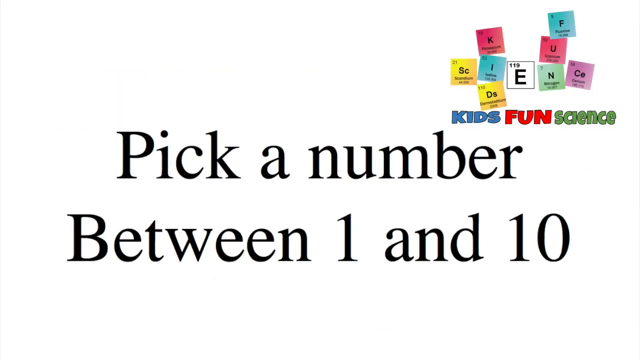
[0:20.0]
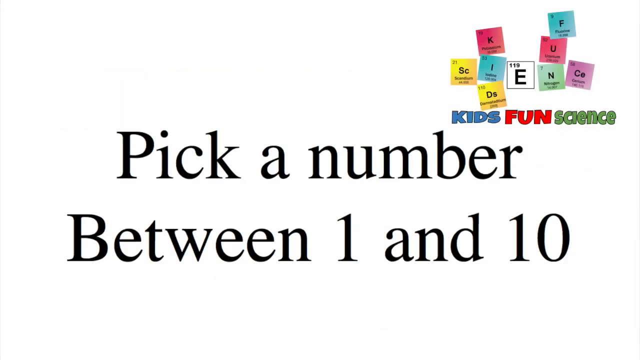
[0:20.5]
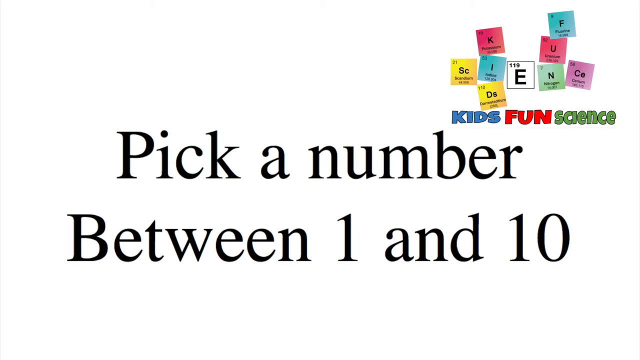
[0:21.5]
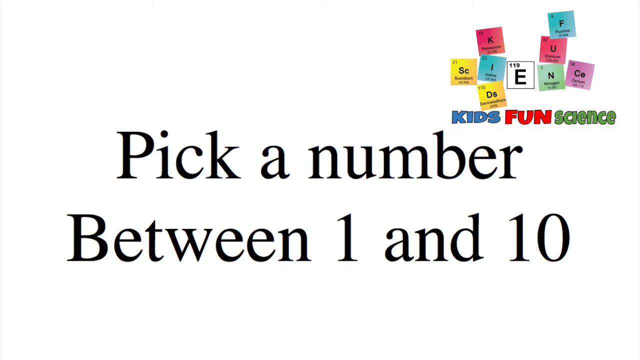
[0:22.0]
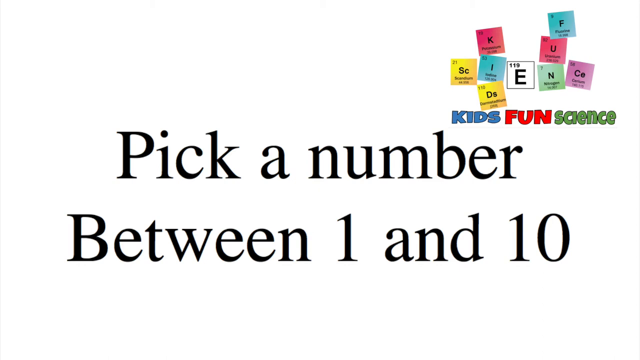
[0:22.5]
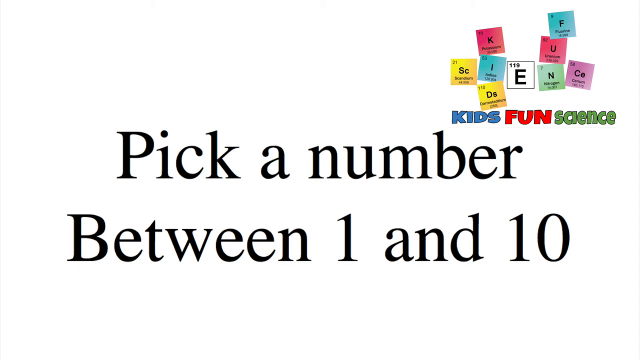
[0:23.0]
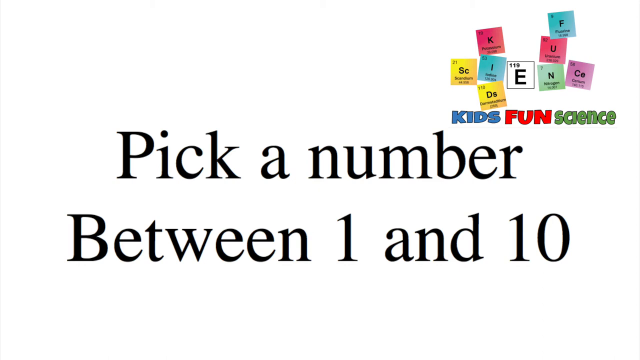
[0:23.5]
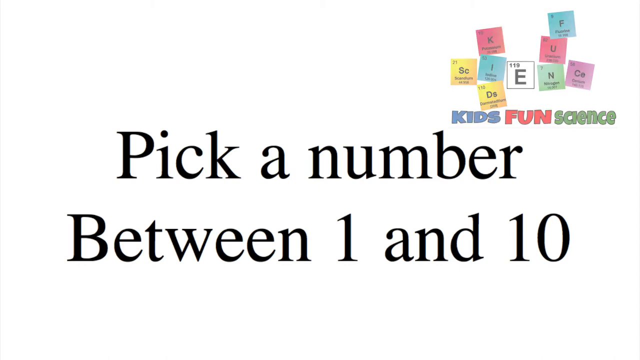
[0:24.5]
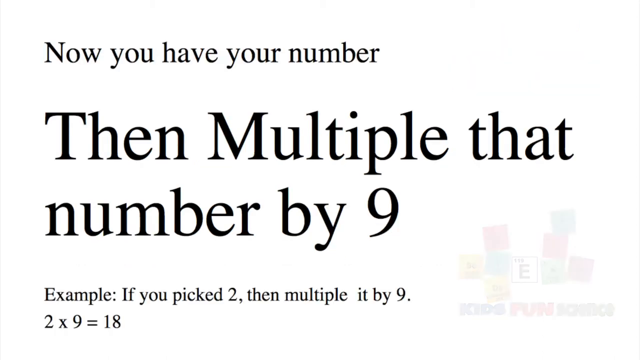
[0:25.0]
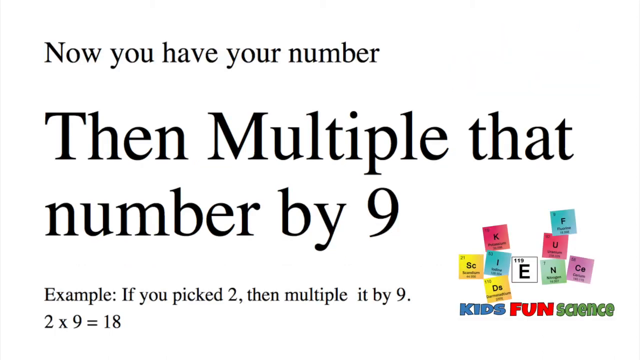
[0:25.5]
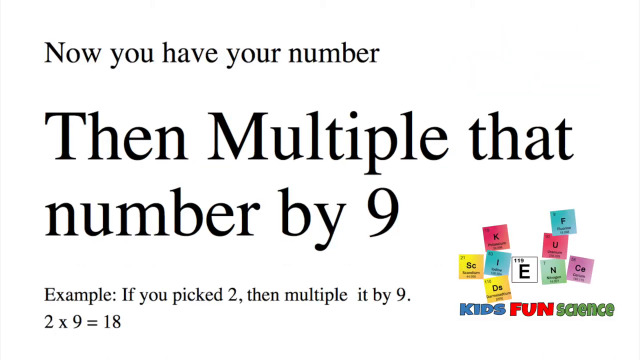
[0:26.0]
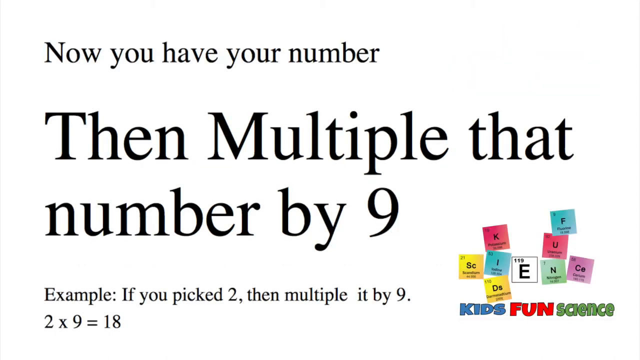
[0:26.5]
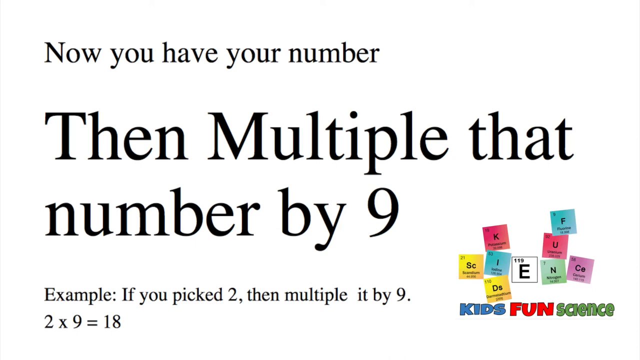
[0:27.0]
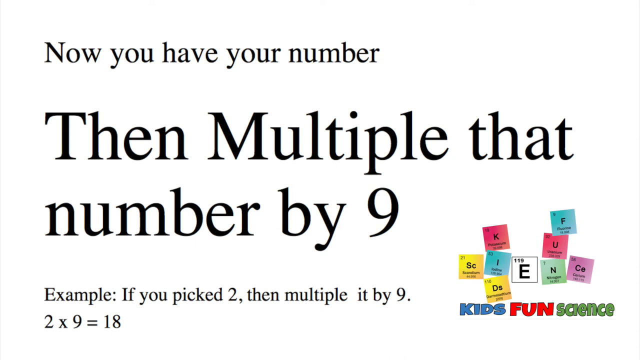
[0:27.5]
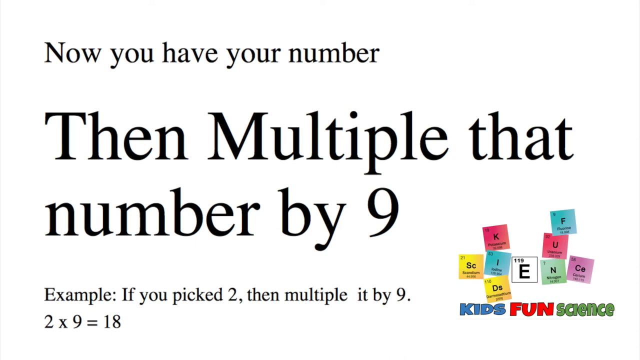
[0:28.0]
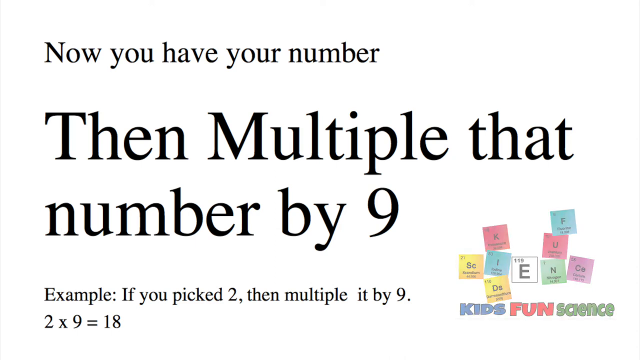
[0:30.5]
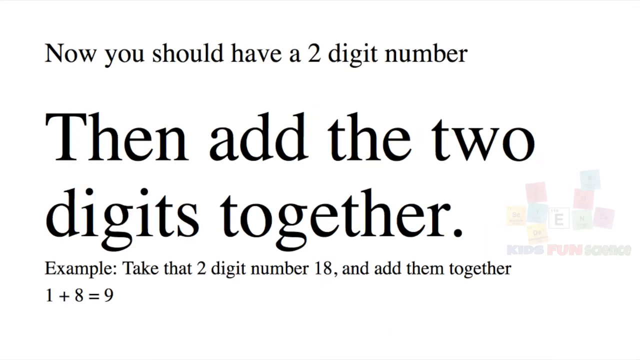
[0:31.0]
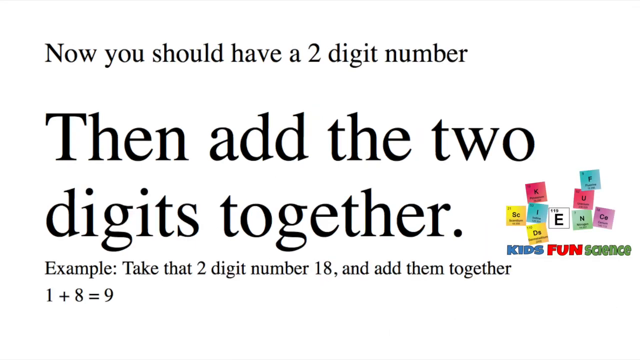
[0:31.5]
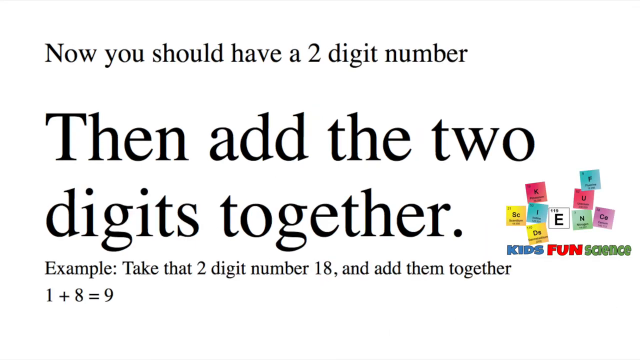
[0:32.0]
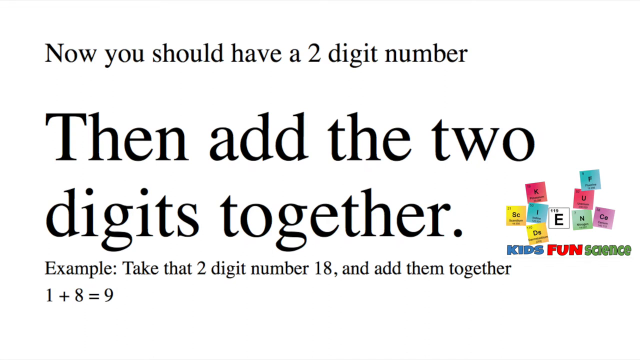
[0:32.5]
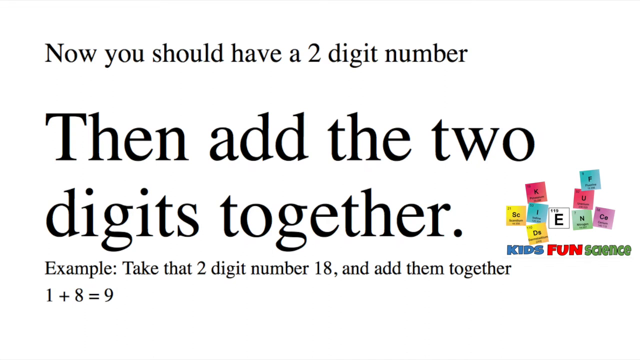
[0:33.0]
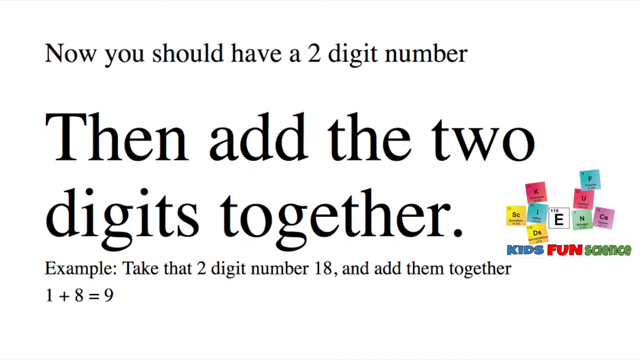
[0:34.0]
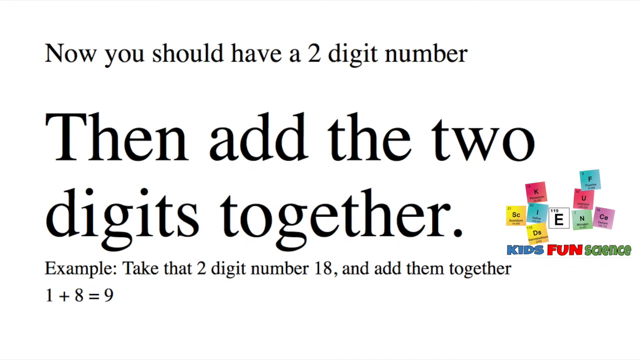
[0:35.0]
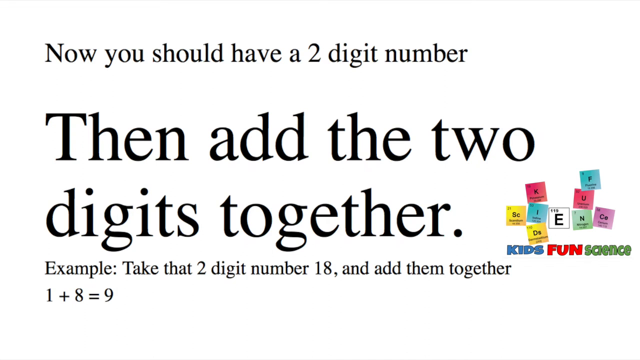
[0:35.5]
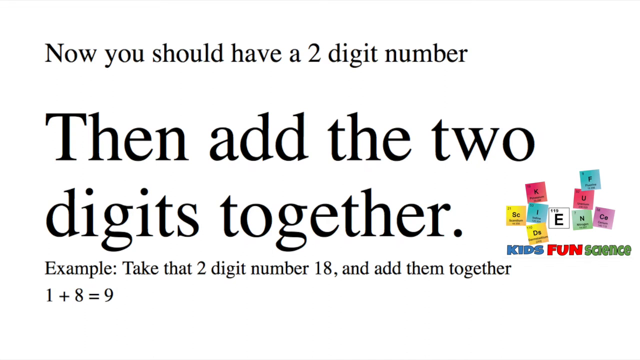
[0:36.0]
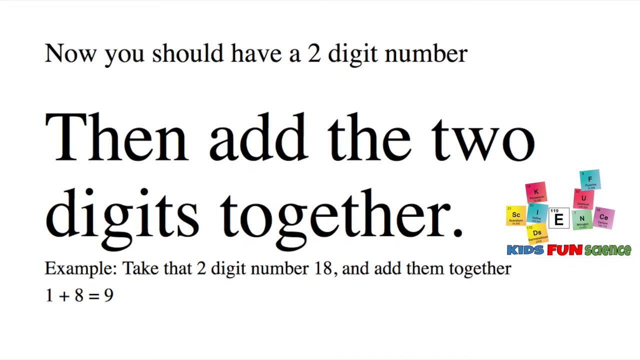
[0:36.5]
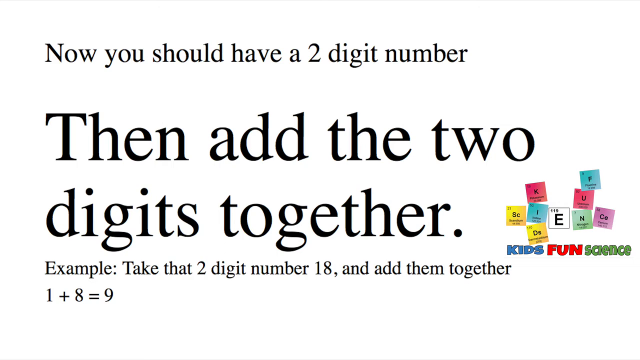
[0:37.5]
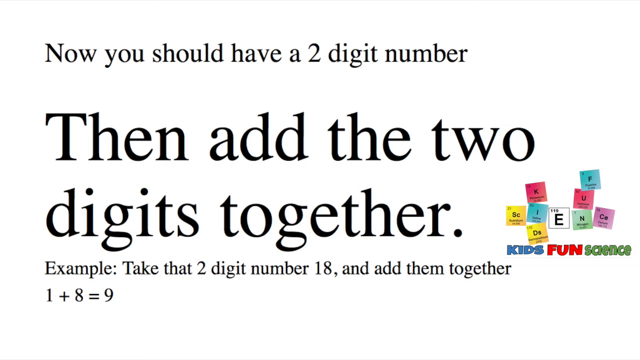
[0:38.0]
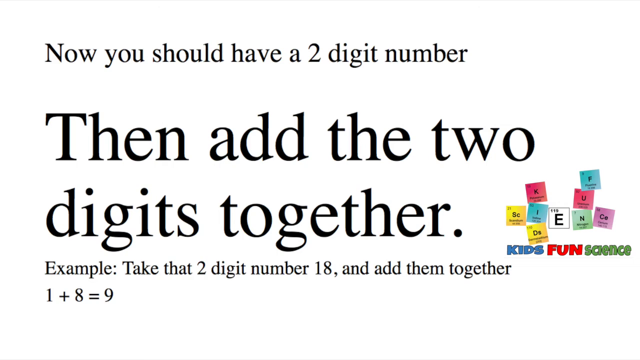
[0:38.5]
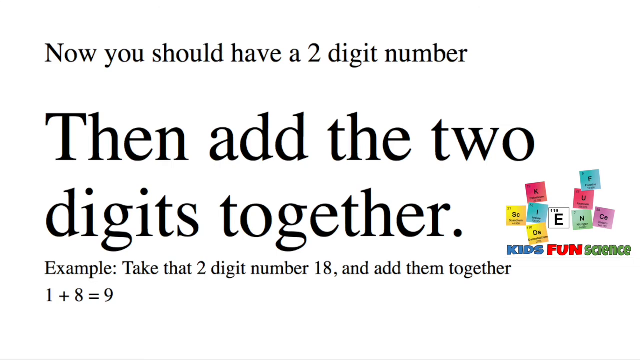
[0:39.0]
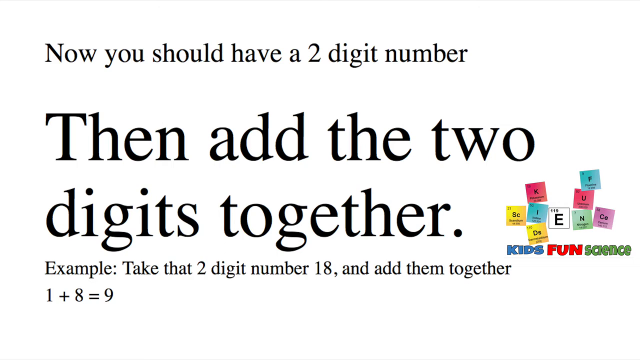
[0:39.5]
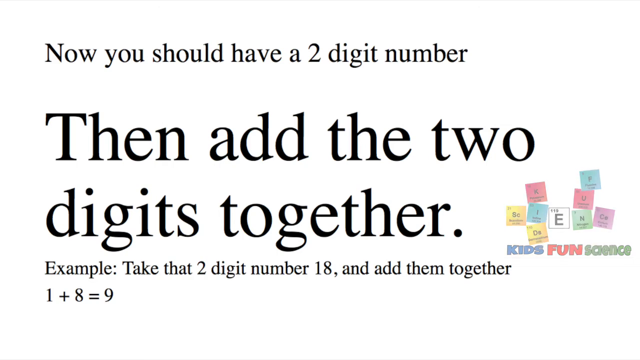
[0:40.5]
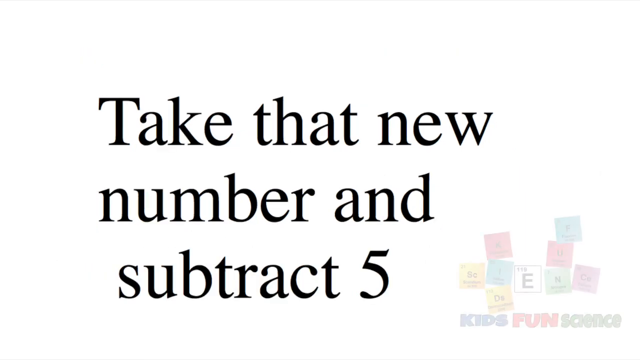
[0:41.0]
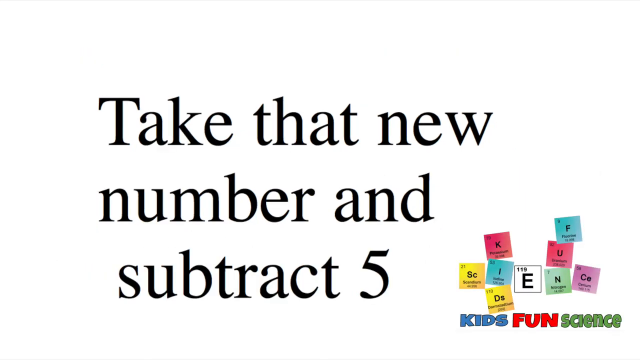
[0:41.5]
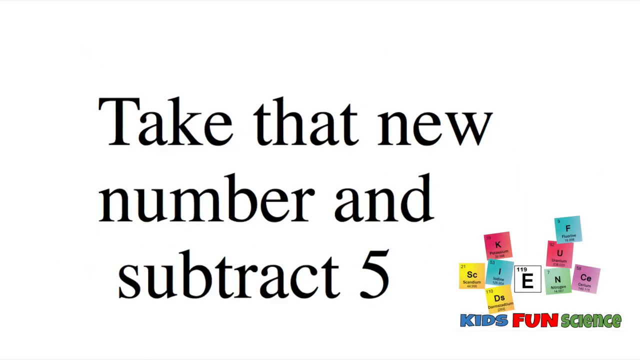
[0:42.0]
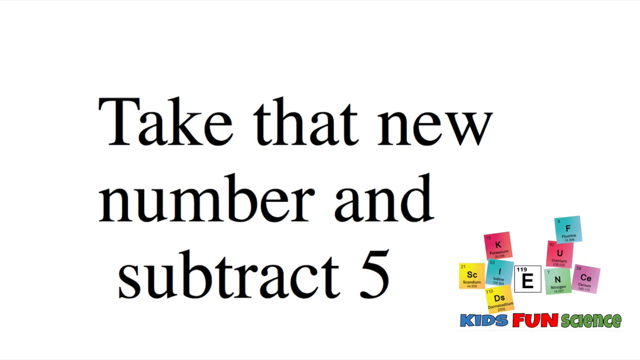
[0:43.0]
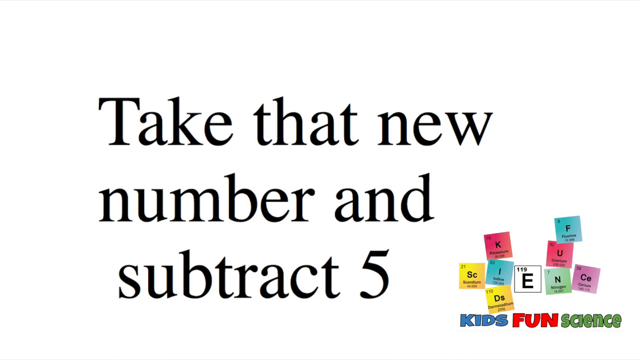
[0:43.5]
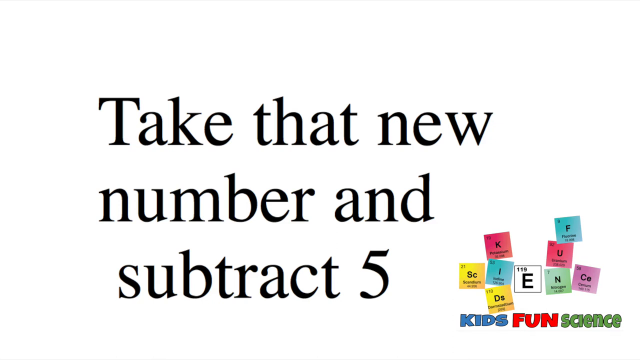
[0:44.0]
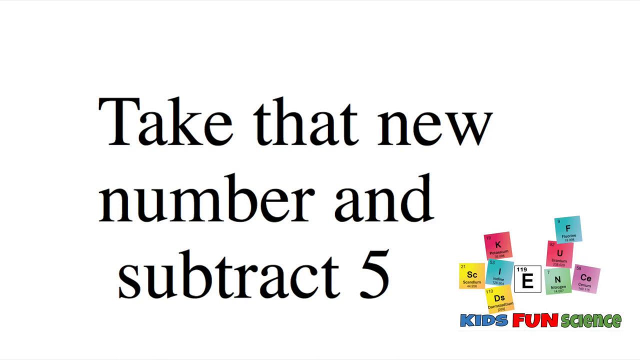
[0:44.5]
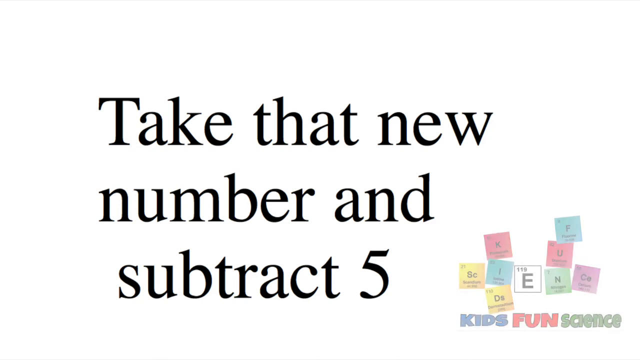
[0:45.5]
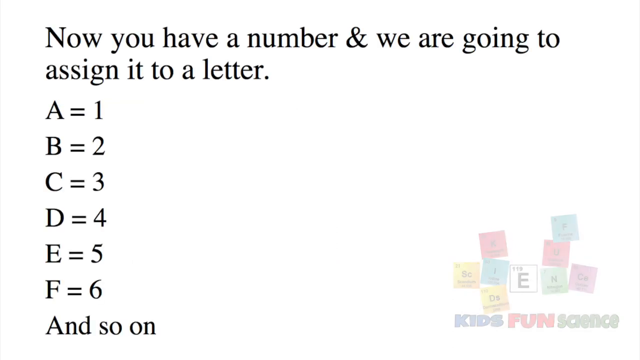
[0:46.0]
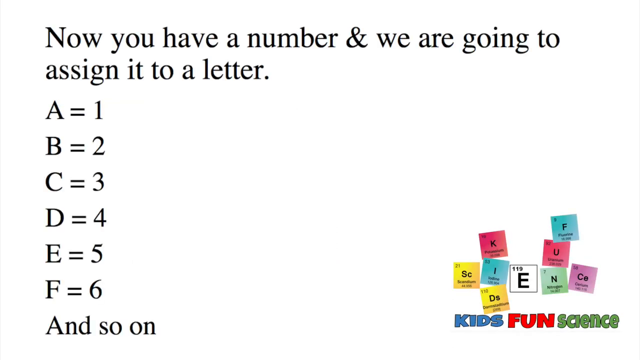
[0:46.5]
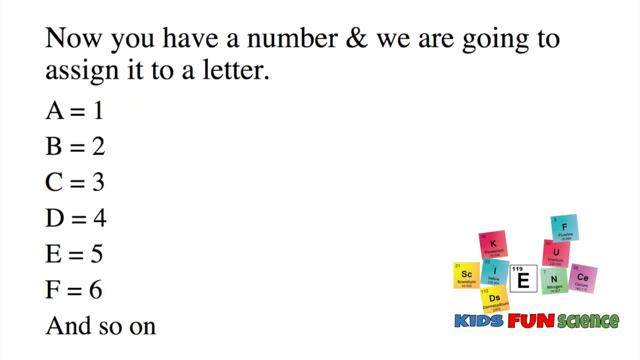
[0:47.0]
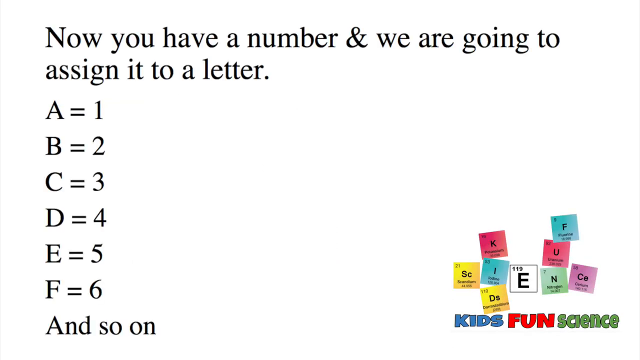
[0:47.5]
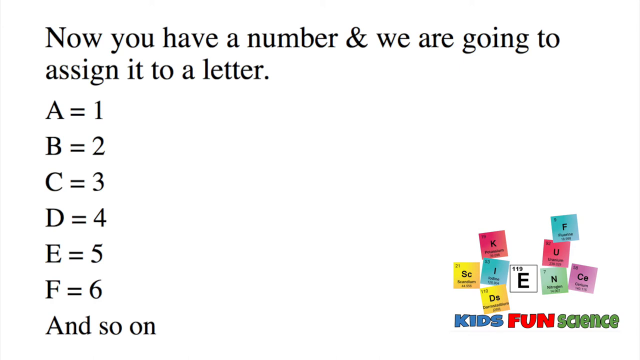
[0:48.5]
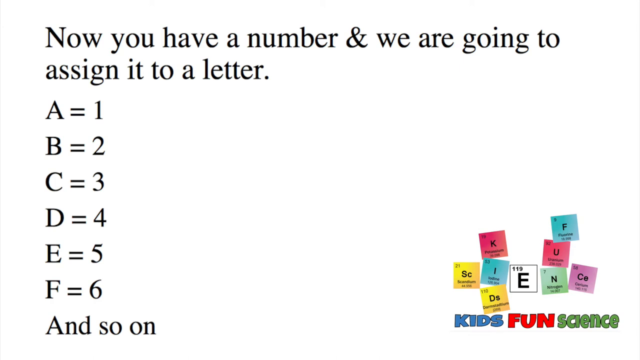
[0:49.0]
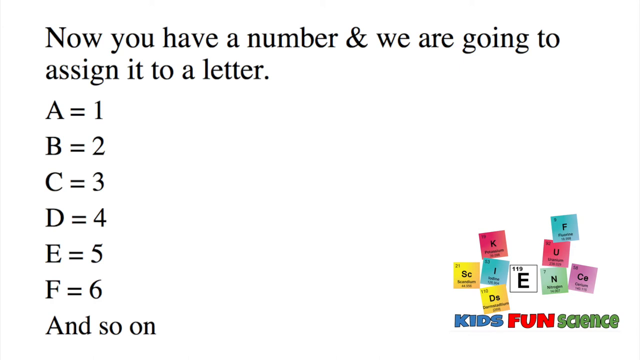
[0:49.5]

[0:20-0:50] The screen reads "Pick a number between 1 and 10," with "Kids Fun Science" in the top right-hand corner and "science" spelled out on what appear to be small, colorful post-its. Text then reads "Now that you have your number, then multiply that number by 9. Example, if you pick 2, then multiply it by 9. 2 times 9 equals 18. Now you should have a two-digit number. Then add the two digits together. Example. Take that two-digit number, 18, and add them together. 1 plus 8 equals 9. Take that new number and subtract 5. Now you have a number and we are going to assign it to a letter. A equals 1, B equals 2, C equals 3, D equals 4, E equals 5, F equals 6, and so on."